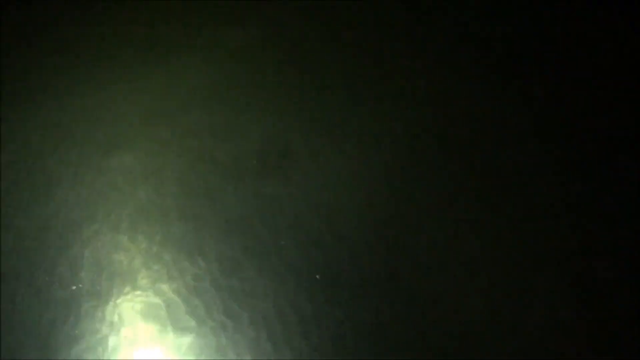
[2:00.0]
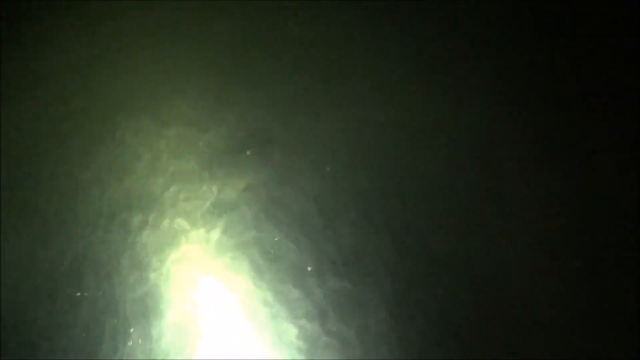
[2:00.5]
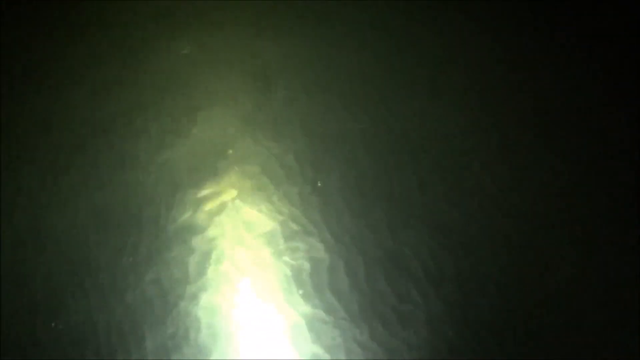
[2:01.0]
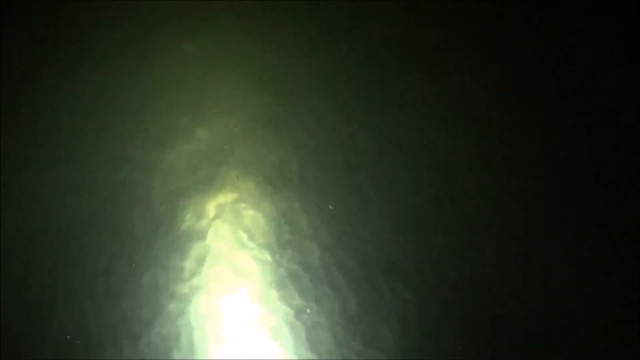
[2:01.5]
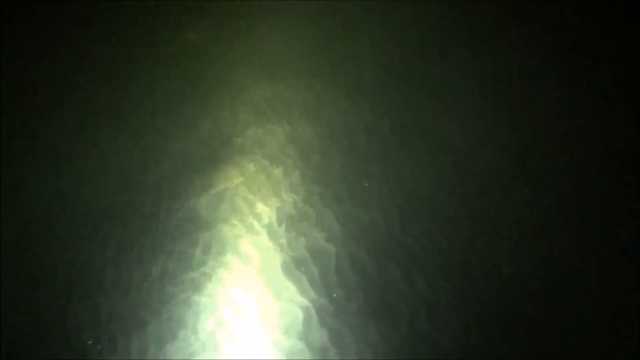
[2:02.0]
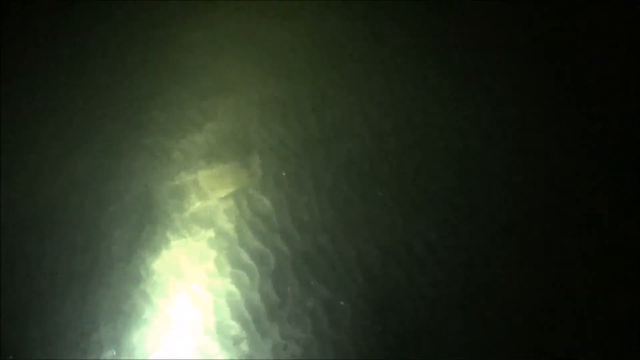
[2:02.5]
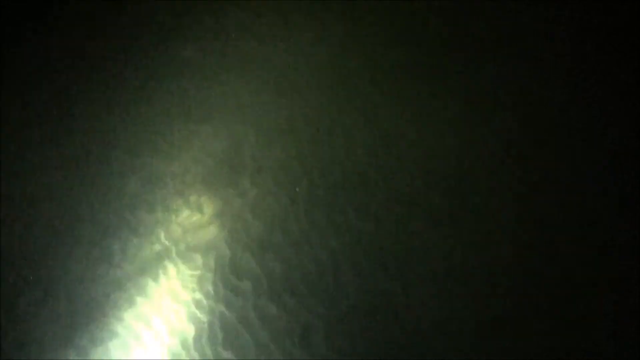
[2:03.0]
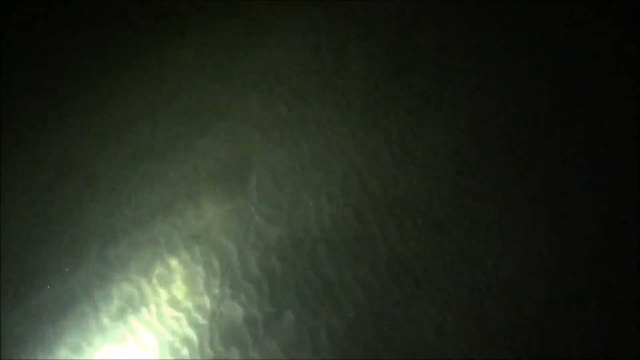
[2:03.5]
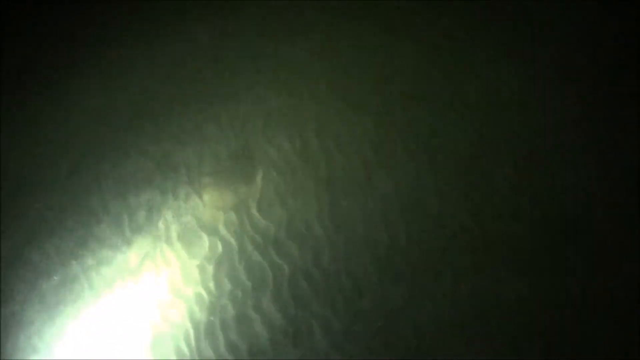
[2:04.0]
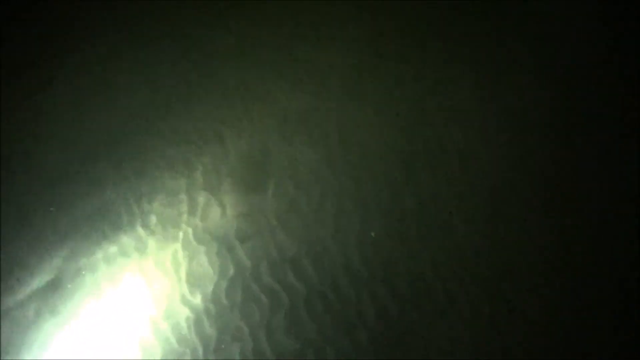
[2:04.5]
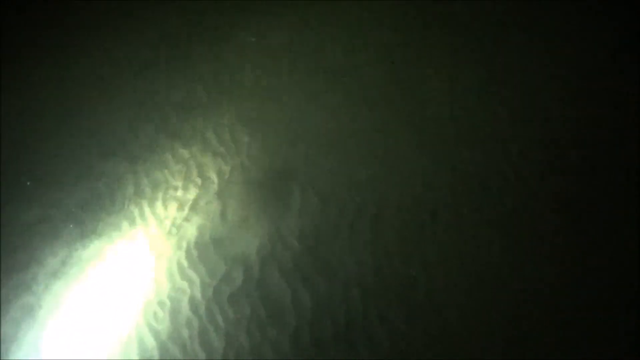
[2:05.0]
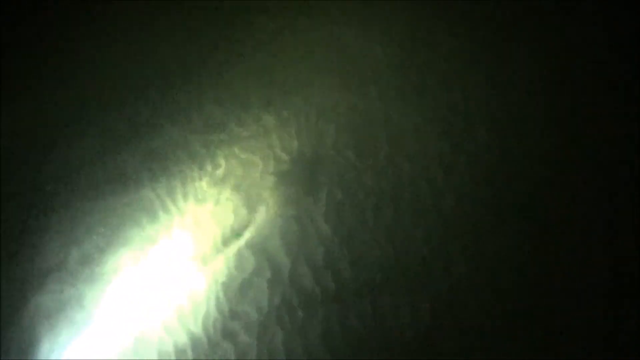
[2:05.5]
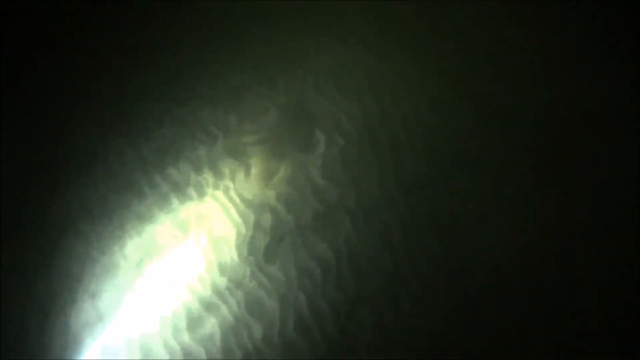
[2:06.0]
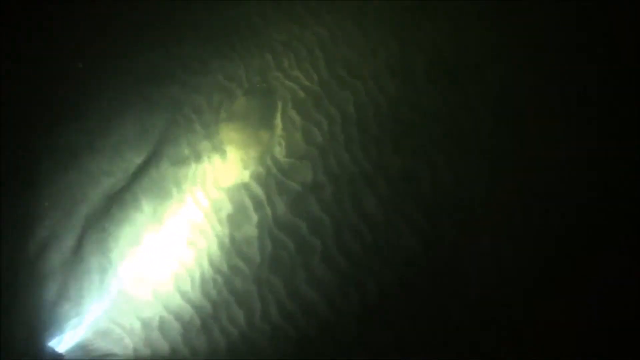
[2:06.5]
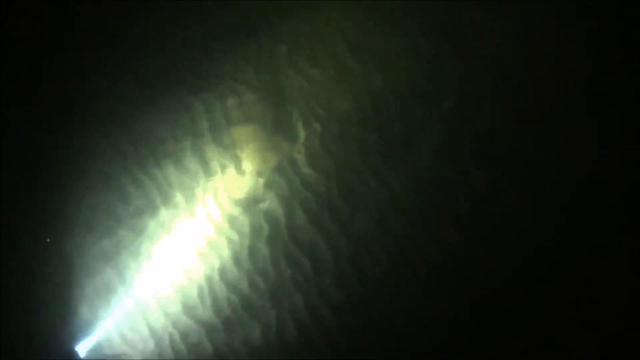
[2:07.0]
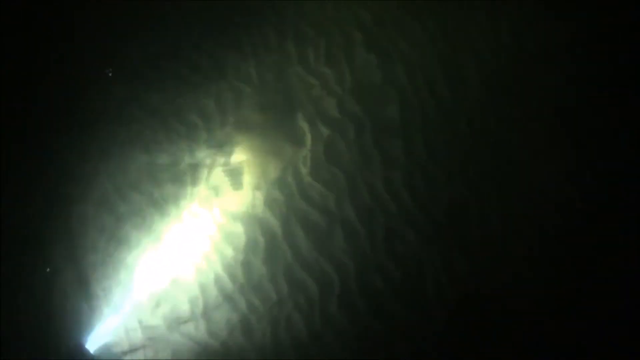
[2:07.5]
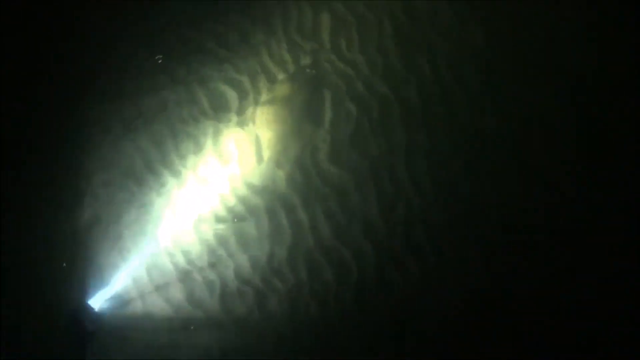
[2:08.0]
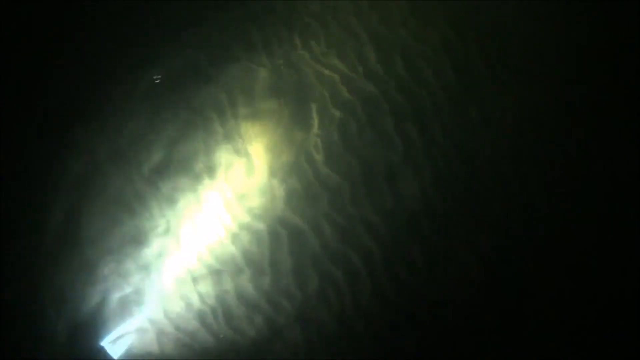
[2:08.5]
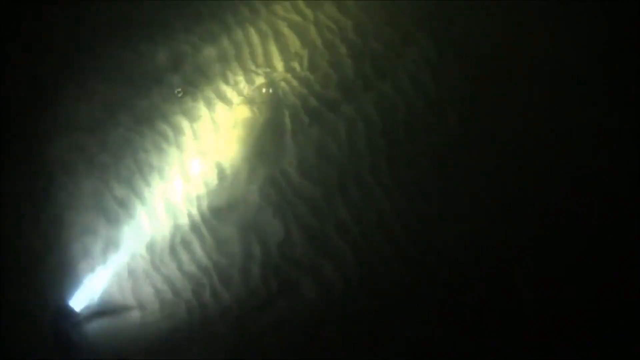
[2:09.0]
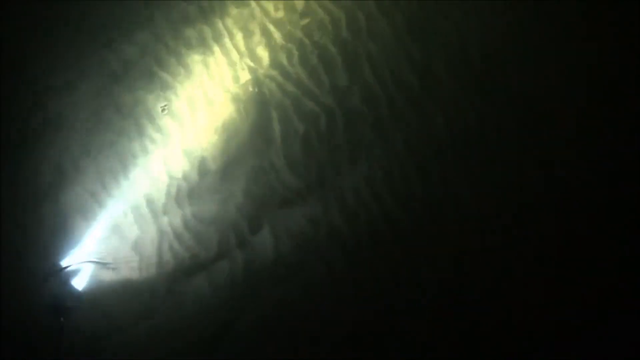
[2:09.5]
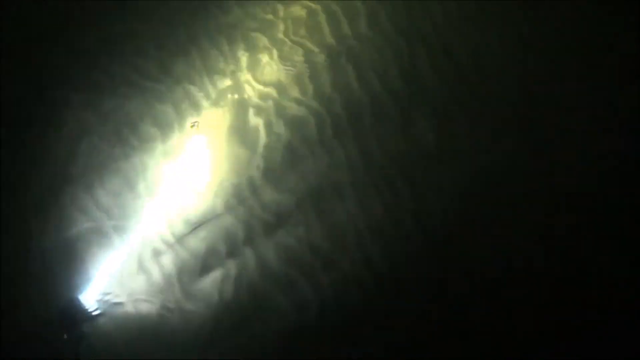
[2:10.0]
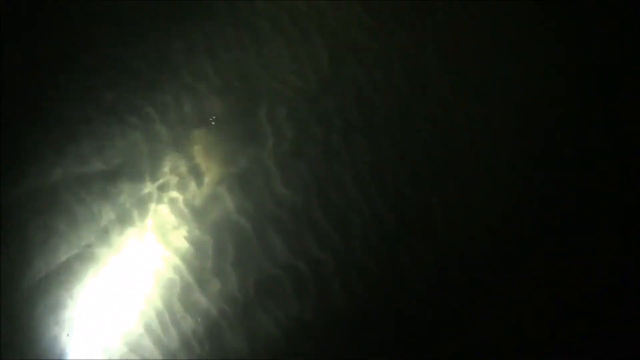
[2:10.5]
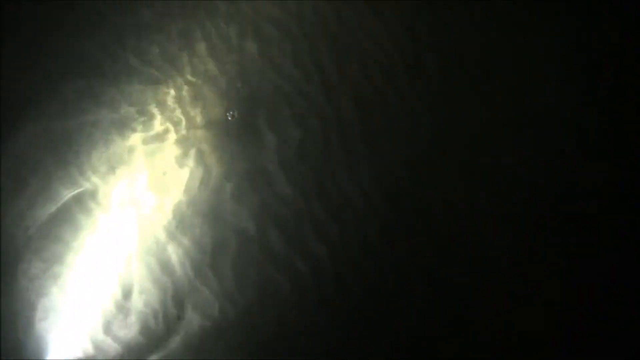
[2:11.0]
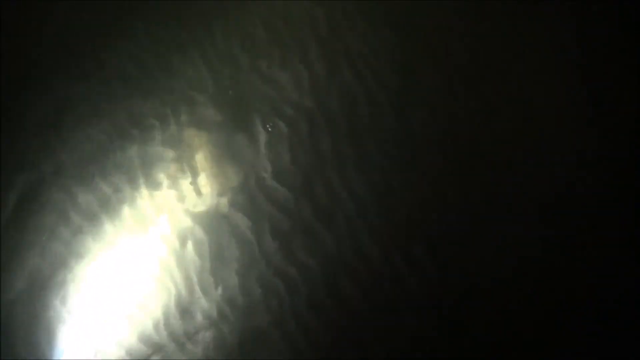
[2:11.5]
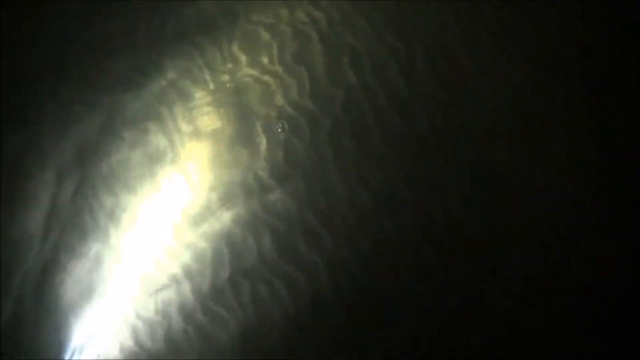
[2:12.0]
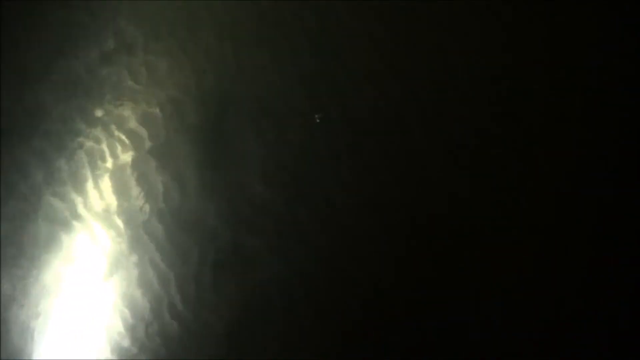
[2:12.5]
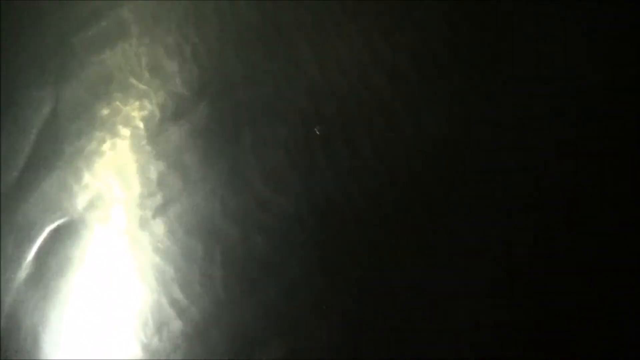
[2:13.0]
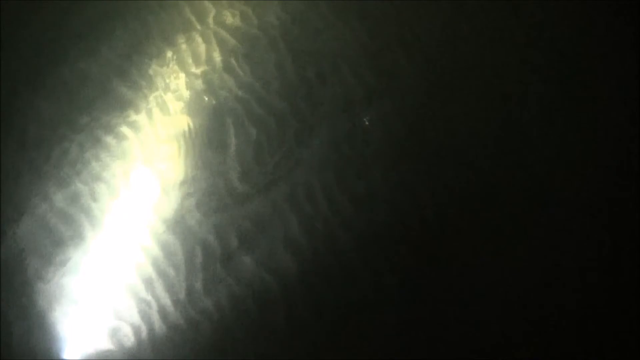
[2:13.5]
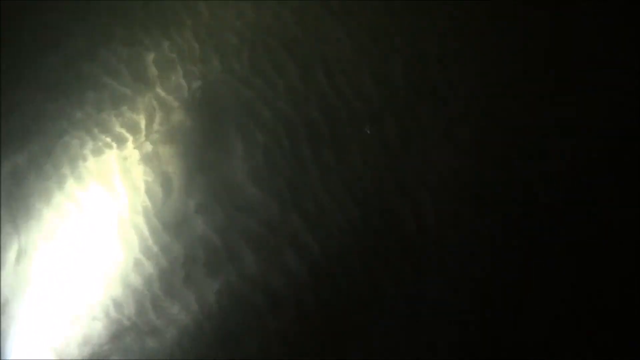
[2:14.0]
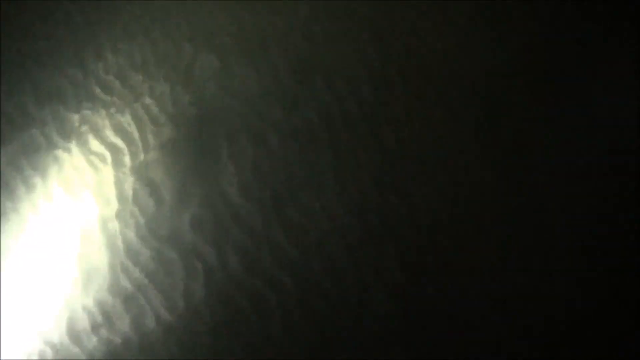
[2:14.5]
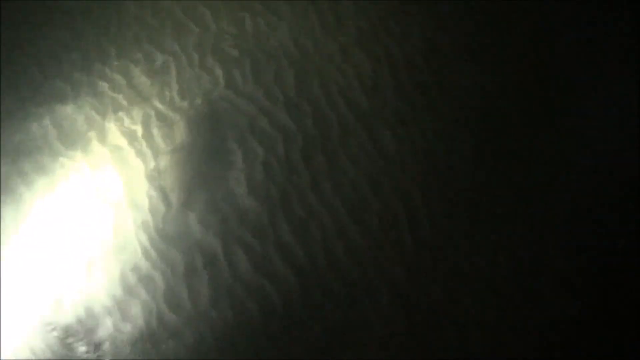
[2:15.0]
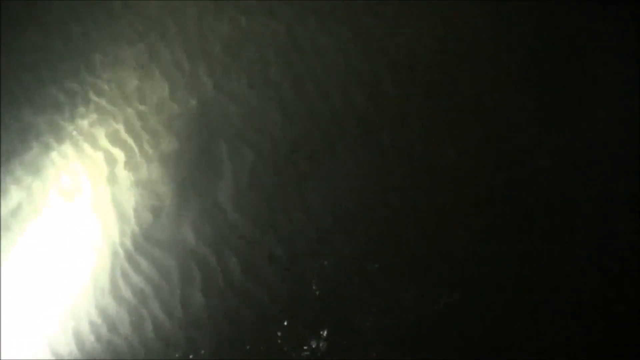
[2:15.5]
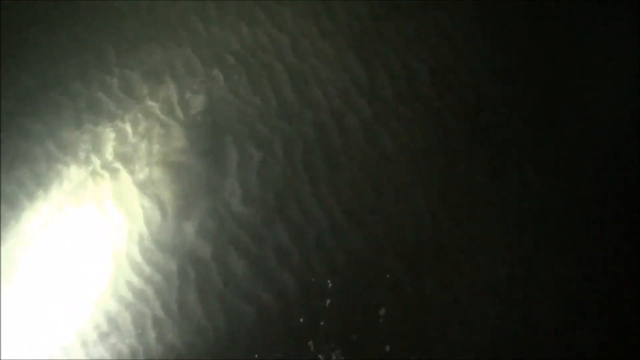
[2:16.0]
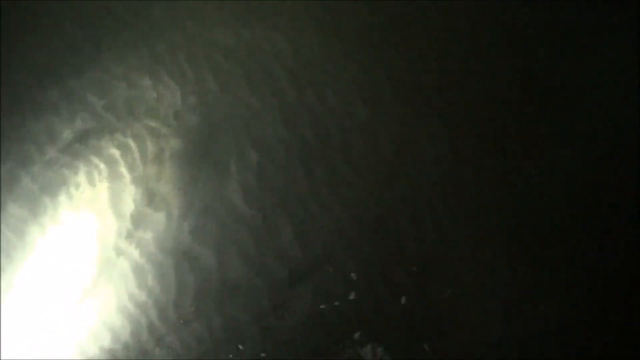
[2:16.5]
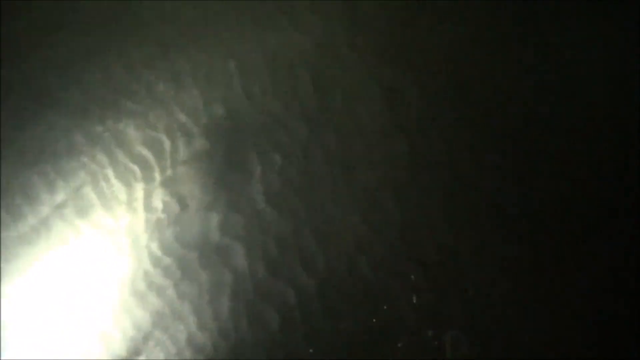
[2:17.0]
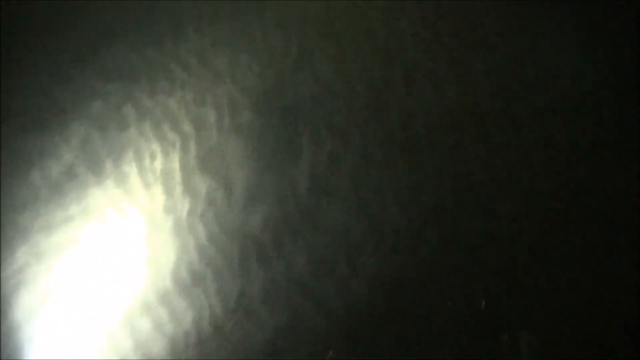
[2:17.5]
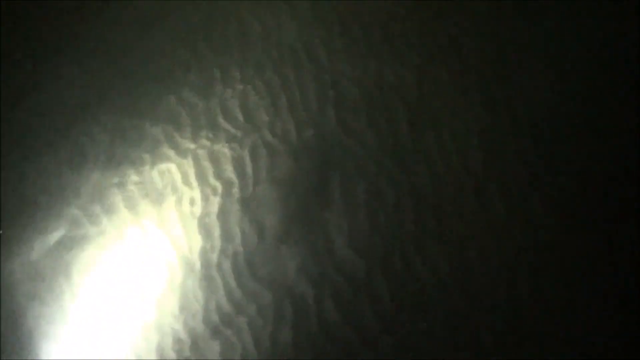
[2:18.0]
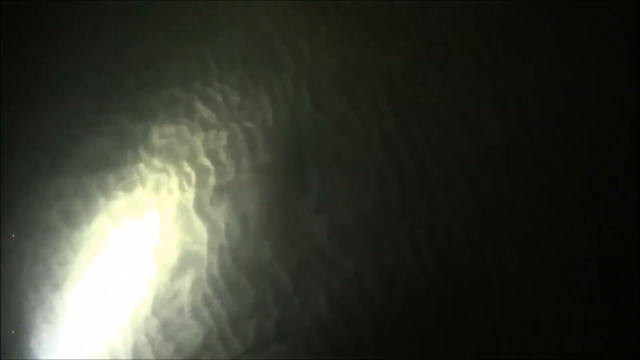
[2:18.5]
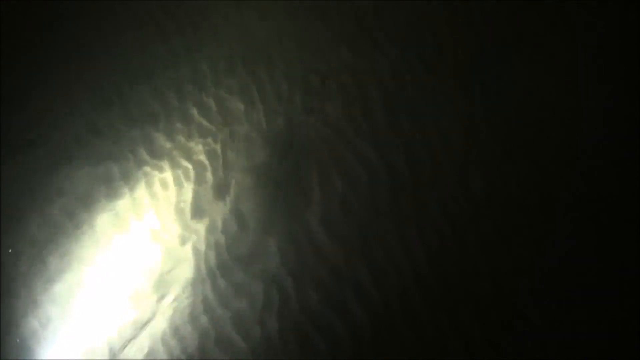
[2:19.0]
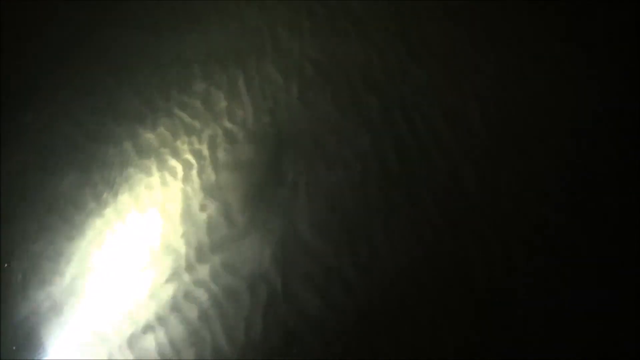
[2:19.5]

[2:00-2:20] The water is recorded with a light illuminating what is below. The bottom beneath the water is visible in more detail: wavy sand with reliefs.